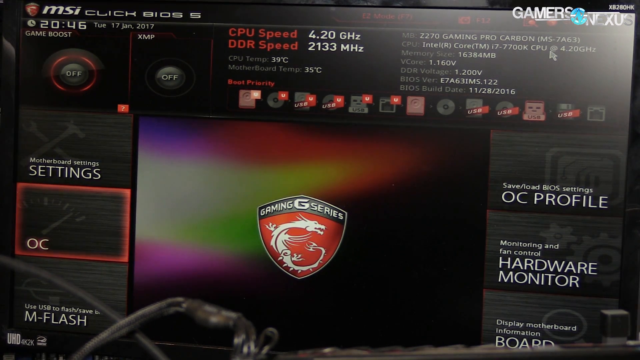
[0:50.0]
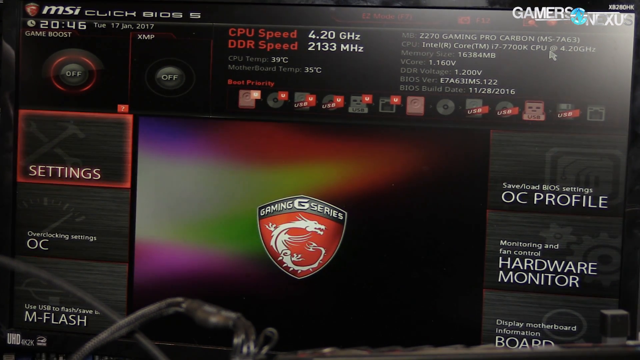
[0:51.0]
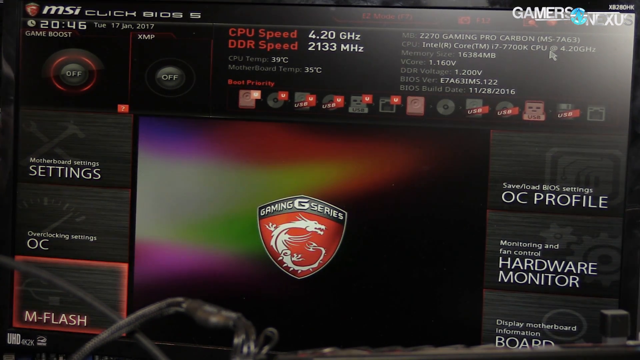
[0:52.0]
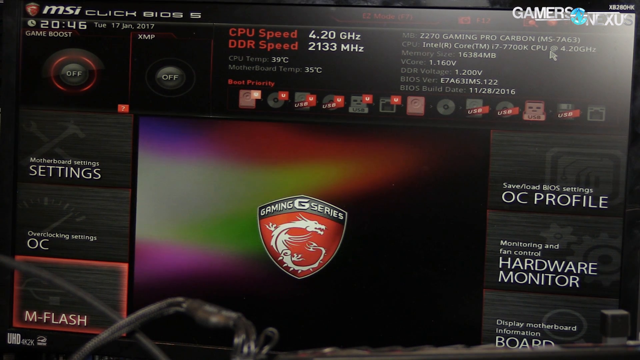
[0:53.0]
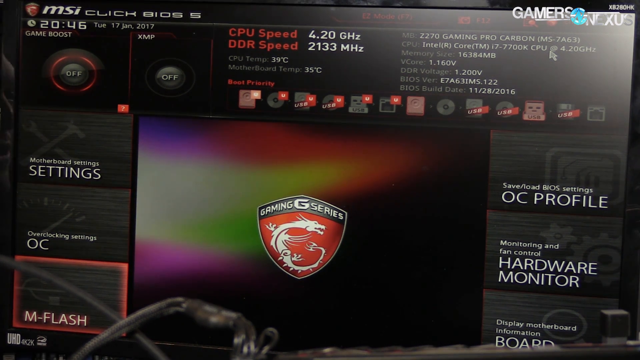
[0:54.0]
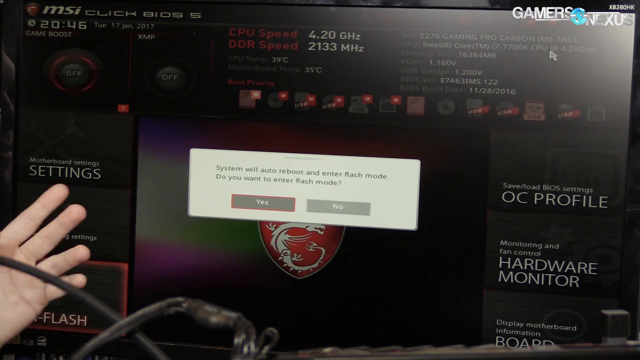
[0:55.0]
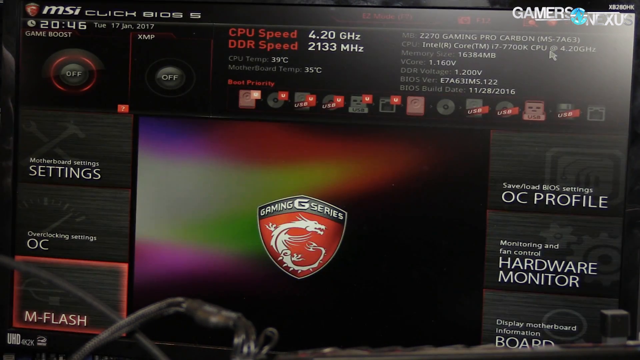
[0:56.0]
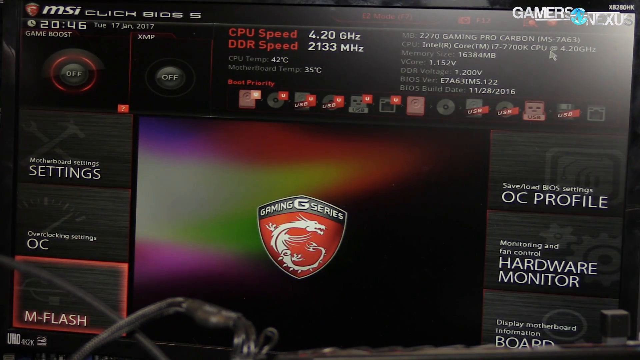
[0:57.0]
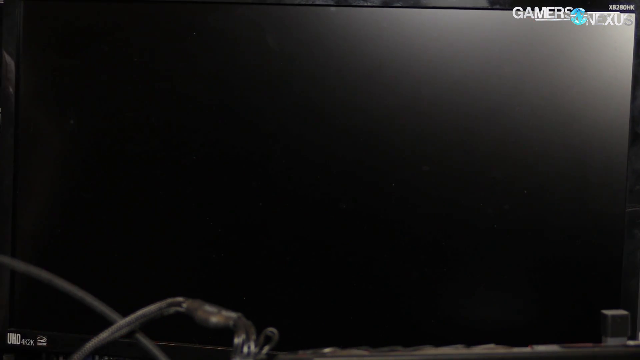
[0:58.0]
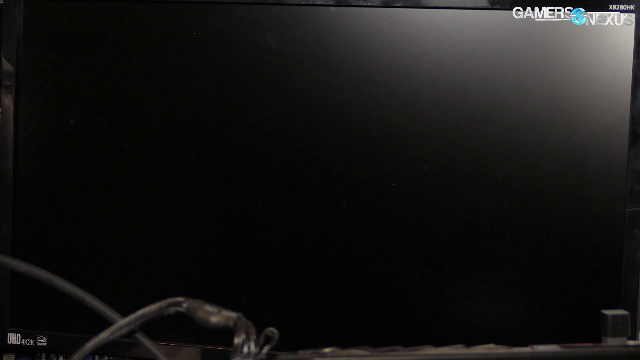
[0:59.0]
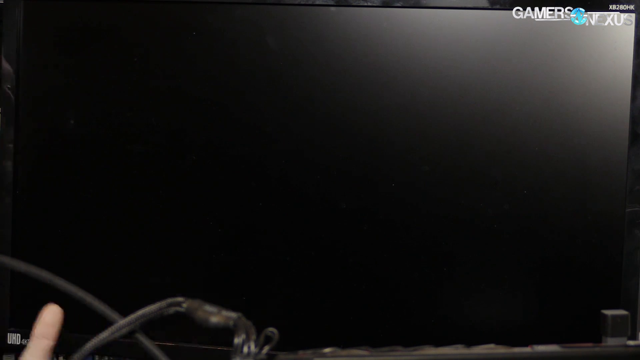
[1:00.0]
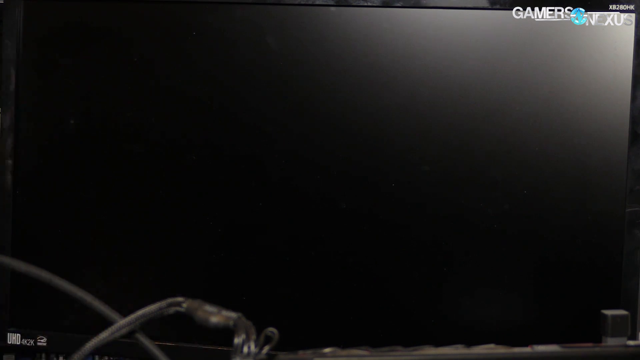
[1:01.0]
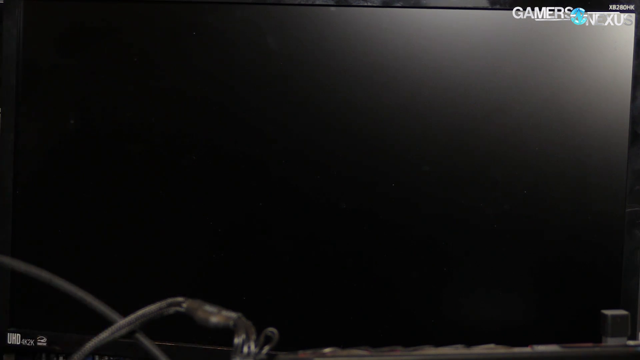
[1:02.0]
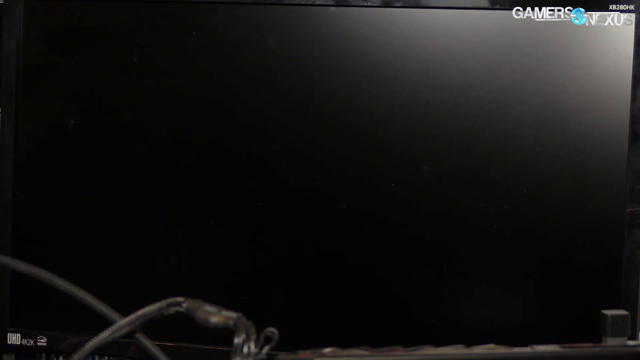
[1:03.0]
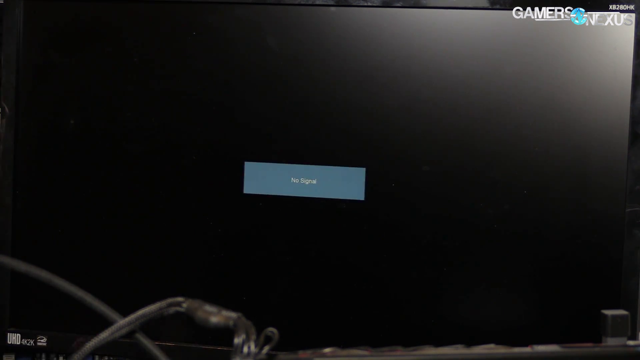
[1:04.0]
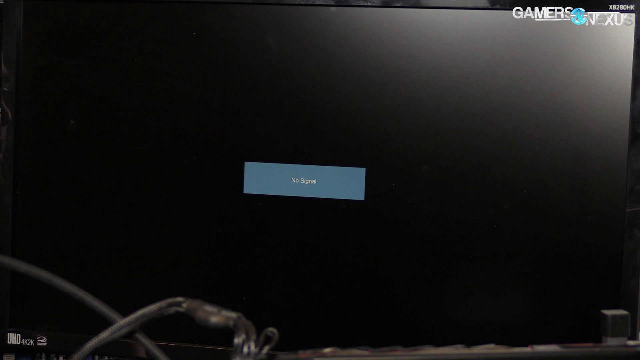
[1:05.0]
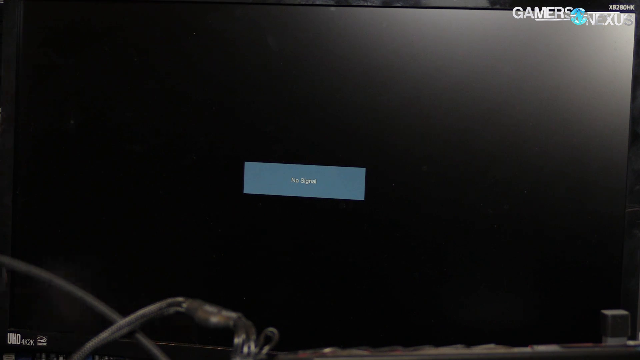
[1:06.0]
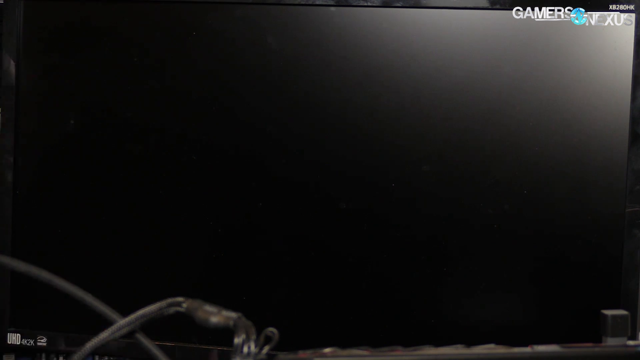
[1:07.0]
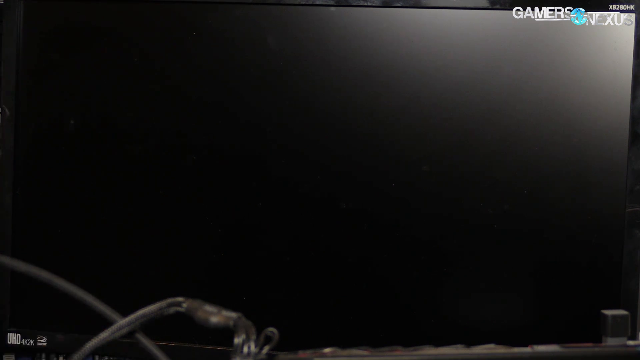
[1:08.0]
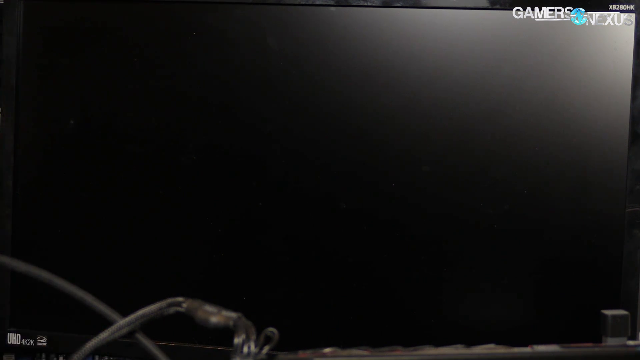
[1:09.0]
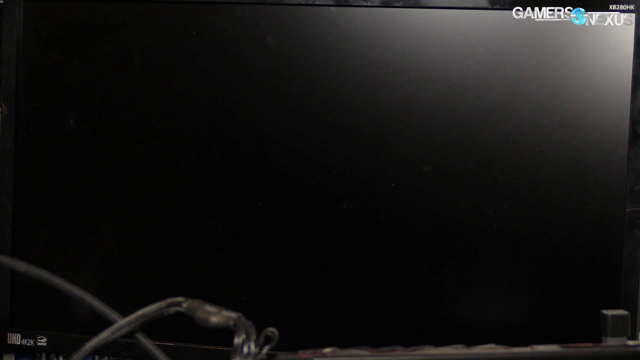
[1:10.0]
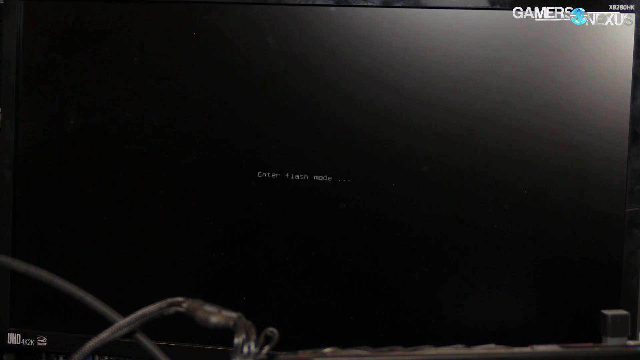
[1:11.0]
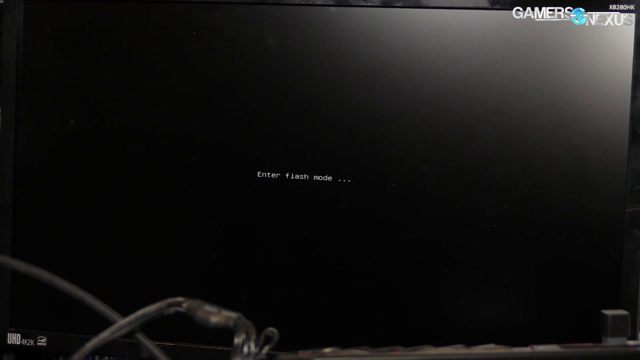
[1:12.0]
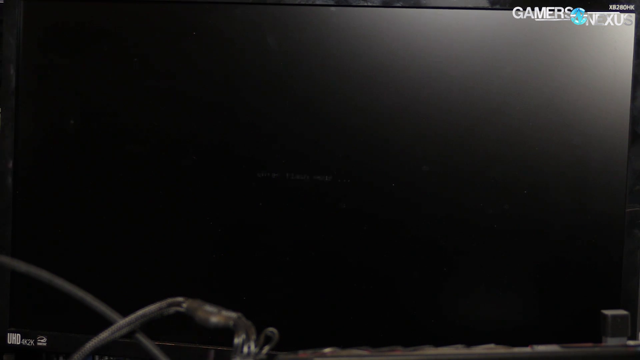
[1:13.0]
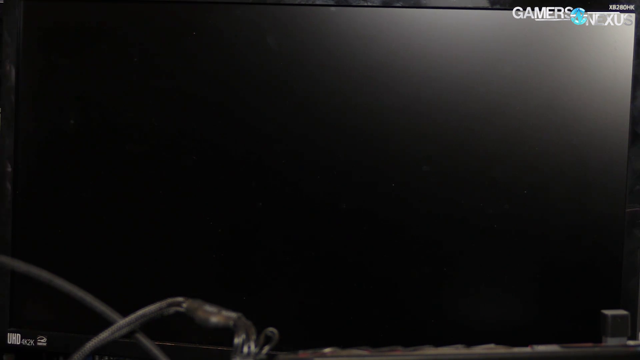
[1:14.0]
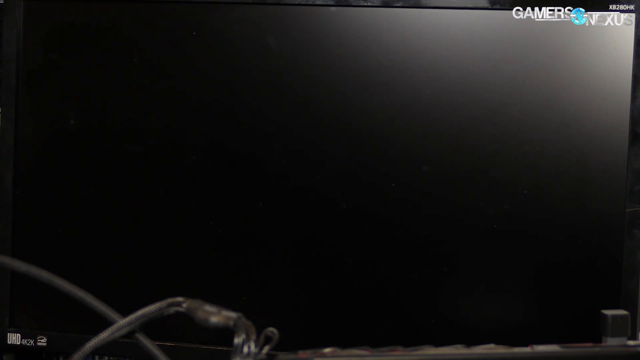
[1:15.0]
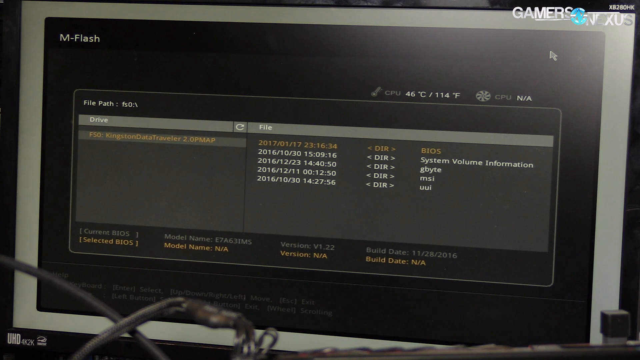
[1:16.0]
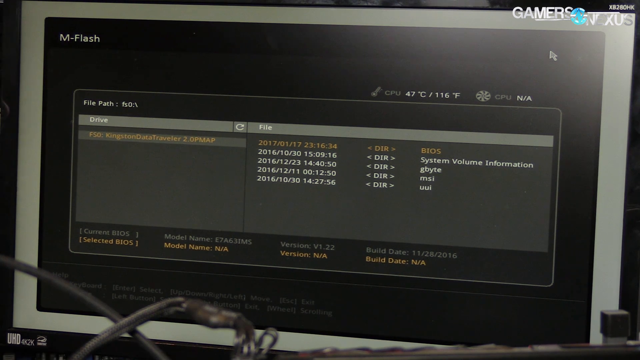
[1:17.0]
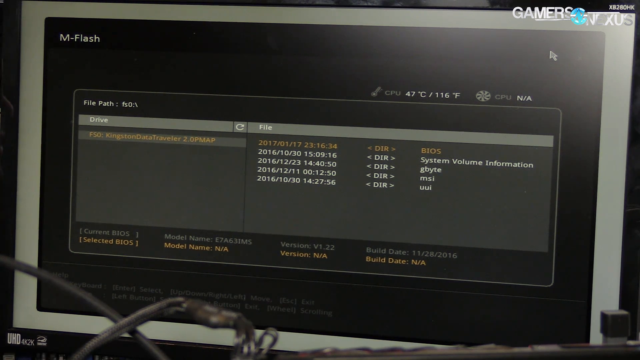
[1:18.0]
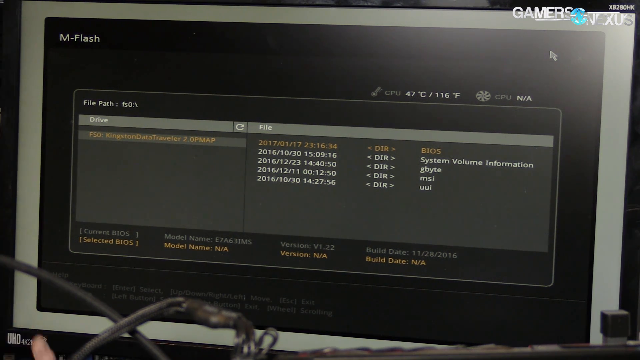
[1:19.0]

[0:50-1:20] A web page-like screen reads "Gaming Series", "CPU Speed", "DDR Speed", "CPU Temp" and "Motherboard Temp", with "Hardware Monitor" on the left and "Settings", "OC" and "Overclocking Settings". A prompt says "System will auto reboot and enter flash mode. Do you want to enter flash mode" with yes or no options, and it is clicked off. Someone's hand then moves where a black wire is. The monitor is blank and says "No signal", apparently turned off, and there is a wait. The screen then says "Enter flash mode", suggesting yes was clicked, and after more waiting it finally pops up with "mFlash" and a drive, something like "Kingston Data Traveler", pulled up.